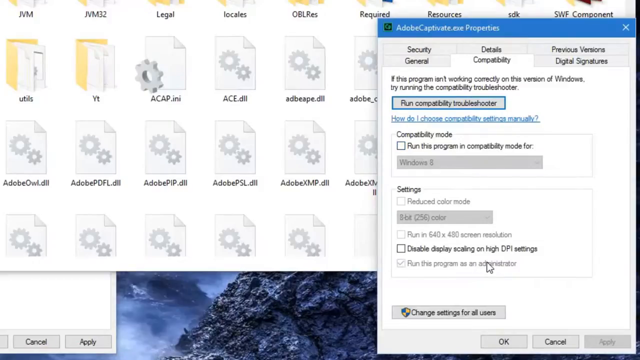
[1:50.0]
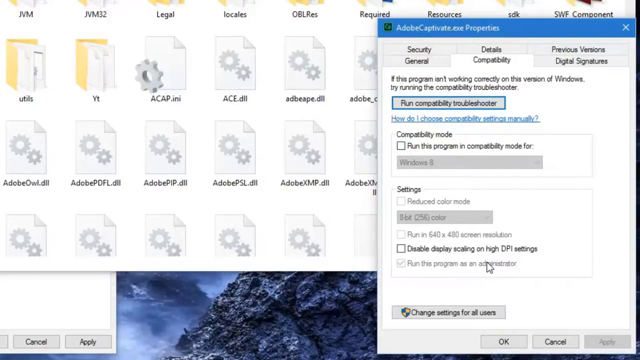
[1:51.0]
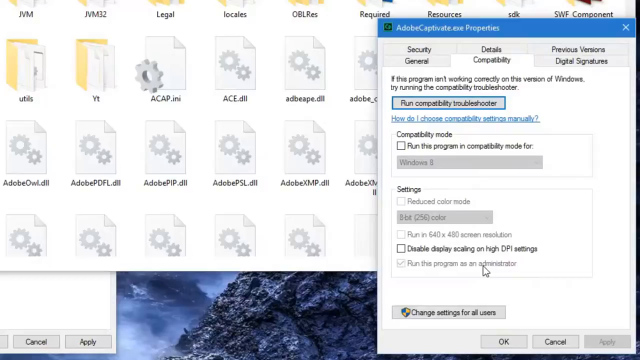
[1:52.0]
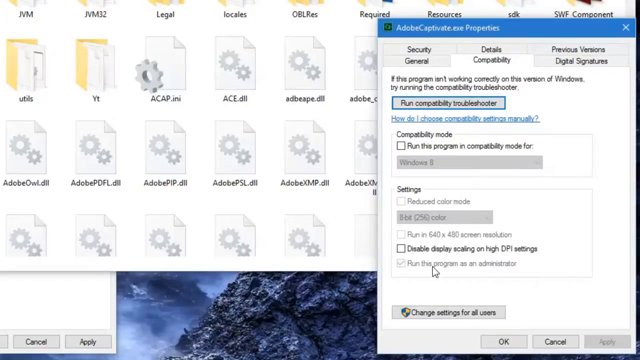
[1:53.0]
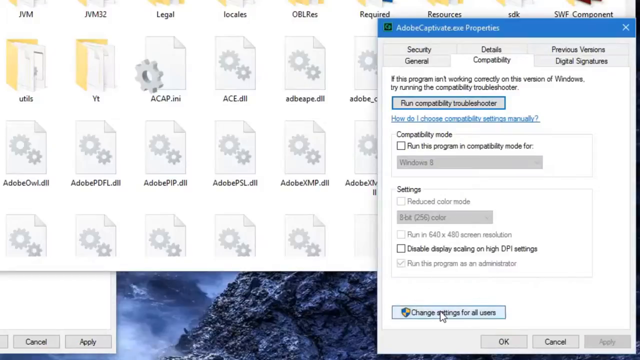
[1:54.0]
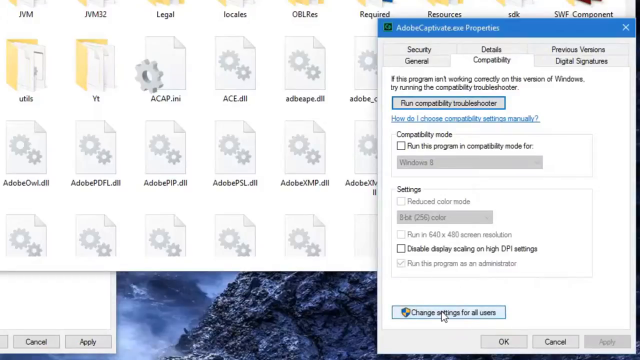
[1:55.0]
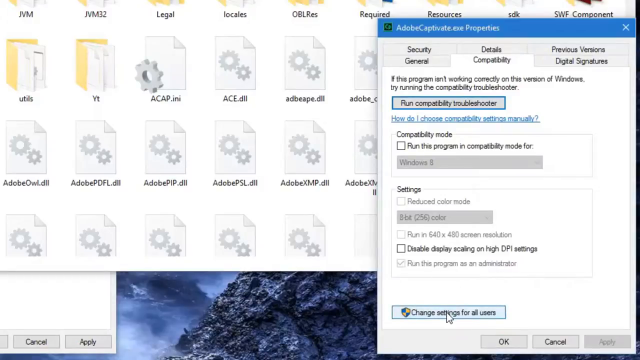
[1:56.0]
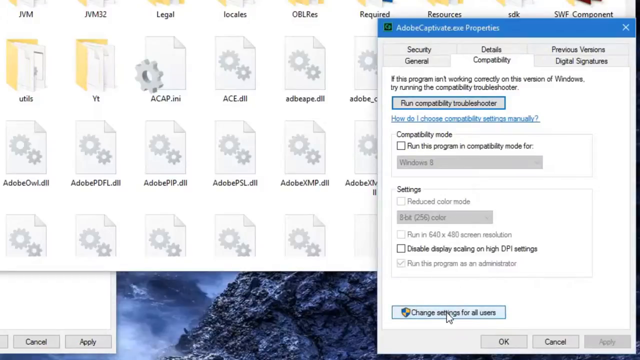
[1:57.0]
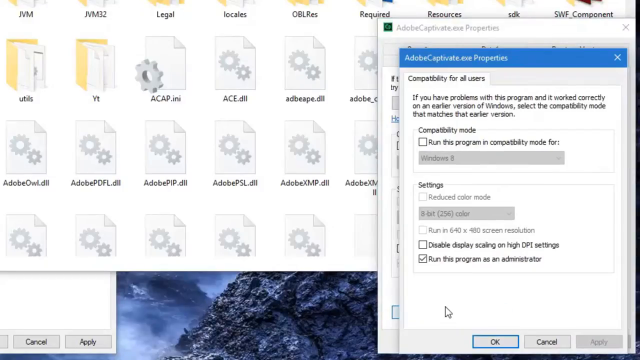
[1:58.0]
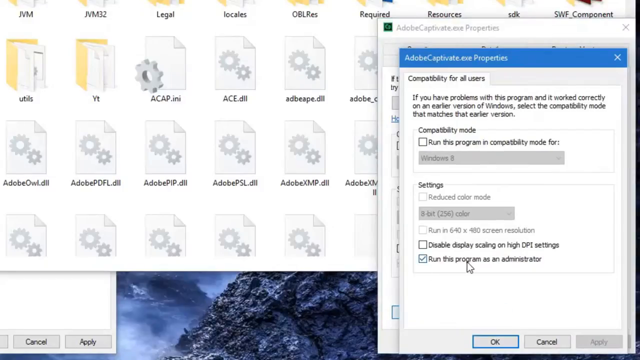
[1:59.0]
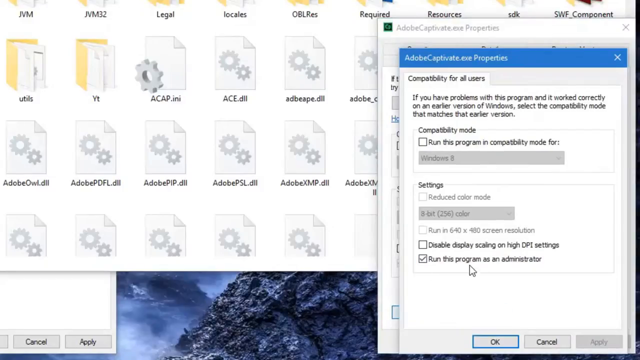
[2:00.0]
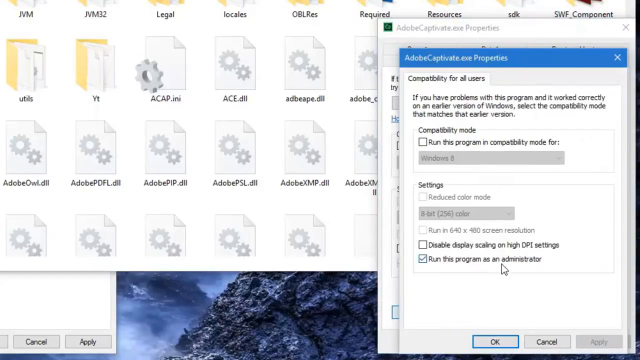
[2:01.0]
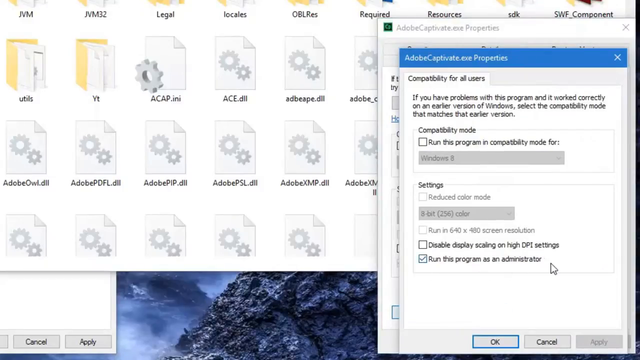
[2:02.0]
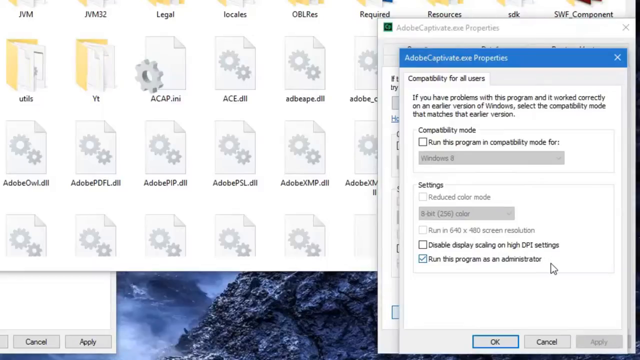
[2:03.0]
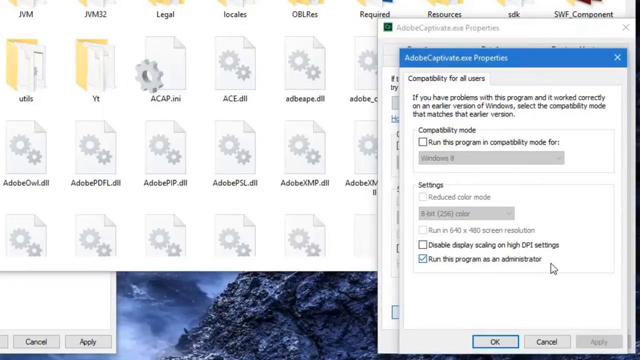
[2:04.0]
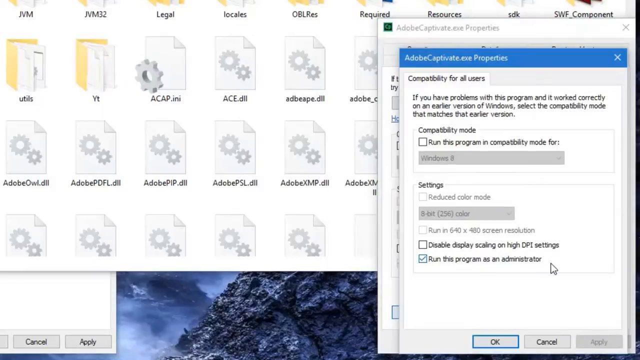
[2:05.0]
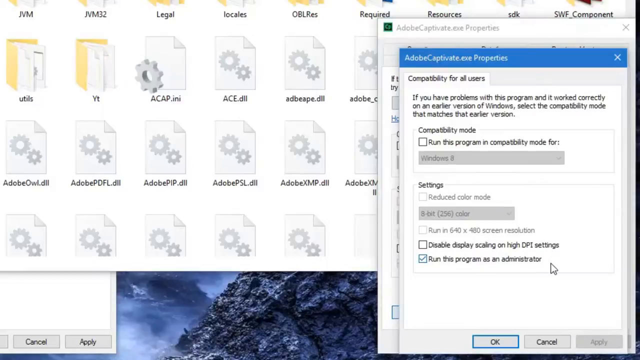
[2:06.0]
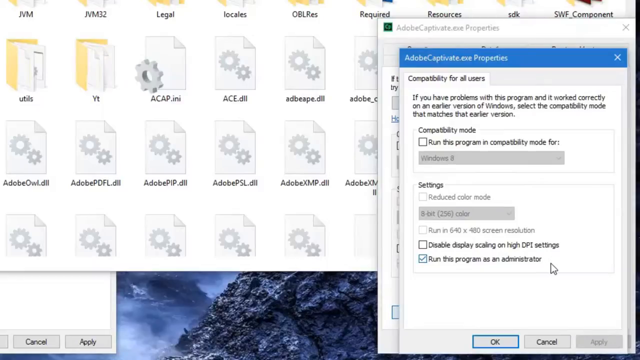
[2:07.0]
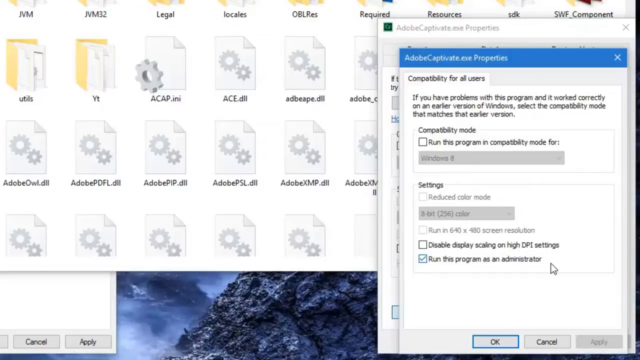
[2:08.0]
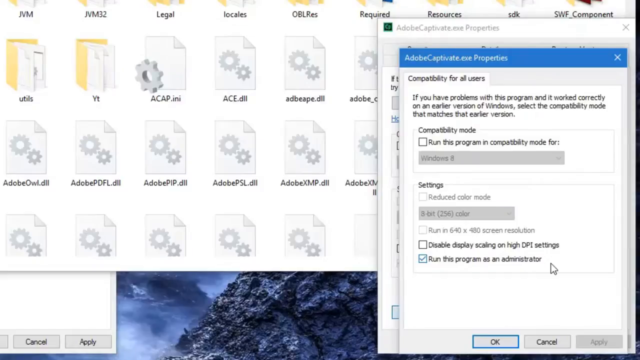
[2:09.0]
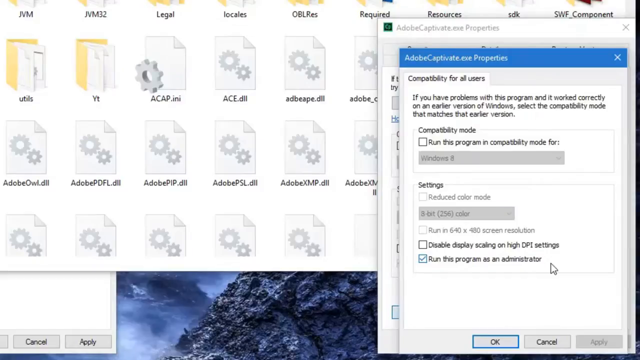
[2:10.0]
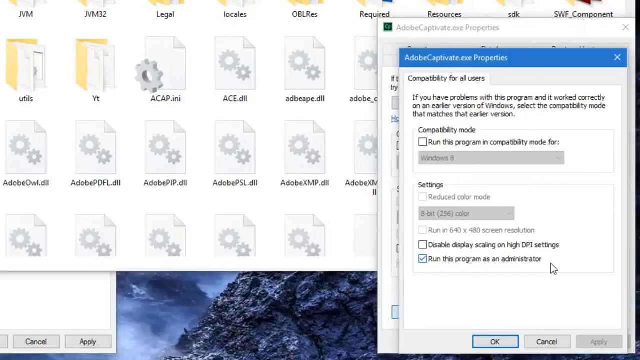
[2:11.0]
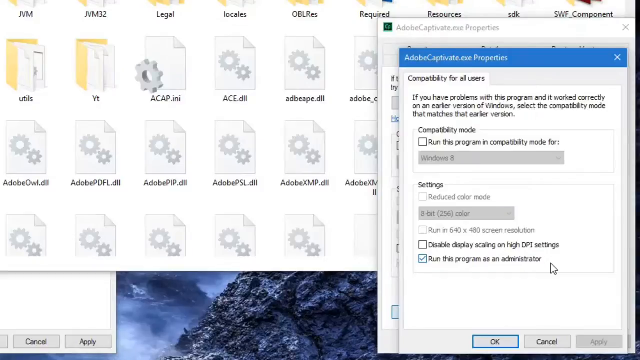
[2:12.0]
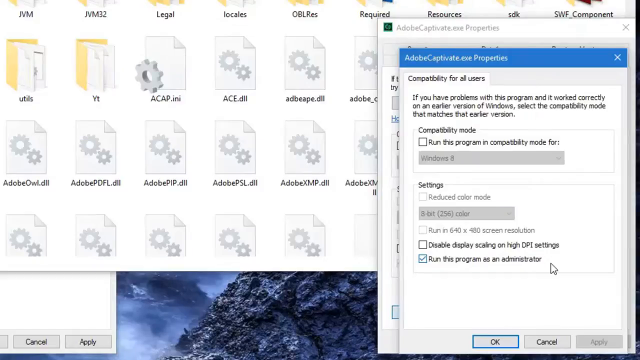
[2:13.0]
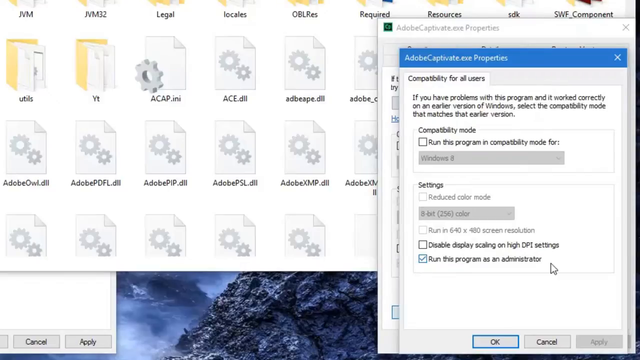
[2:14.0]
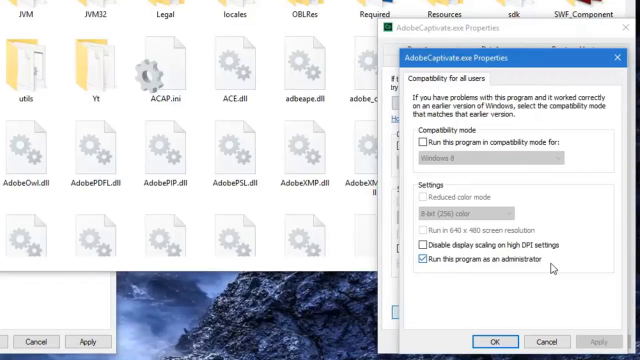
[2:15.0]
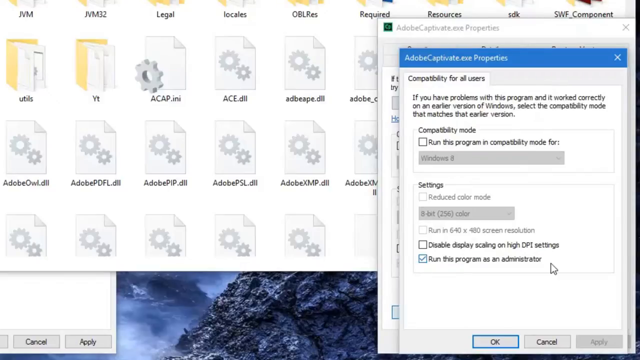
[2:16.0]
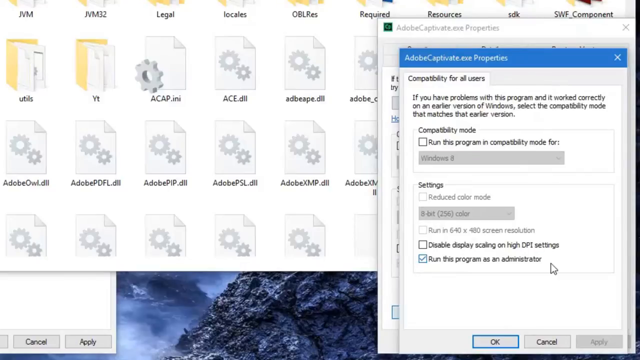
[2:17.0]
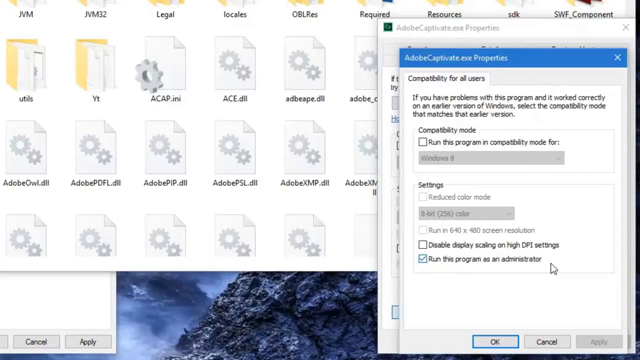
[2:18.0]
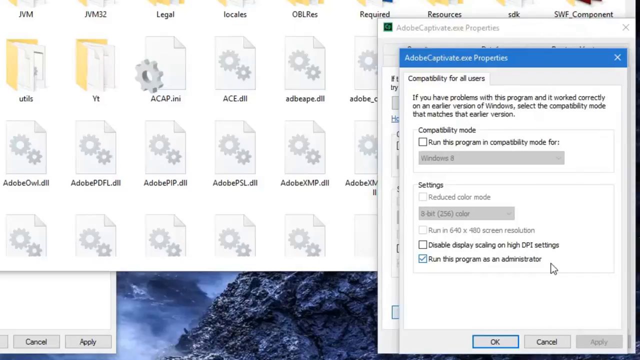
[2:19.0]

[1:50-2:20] Many folders and files appear on the desktop, with mountains seemingly in the background. Folders are chosen, giving options related to Adobe Creative properties.